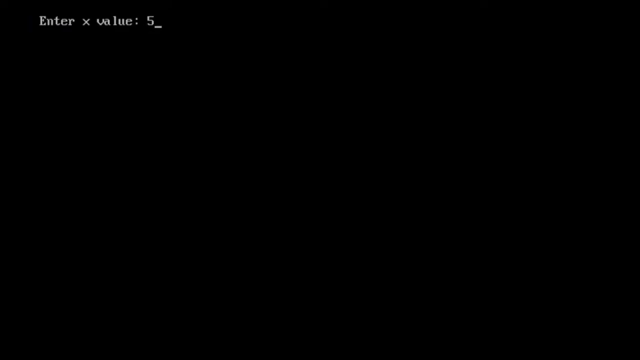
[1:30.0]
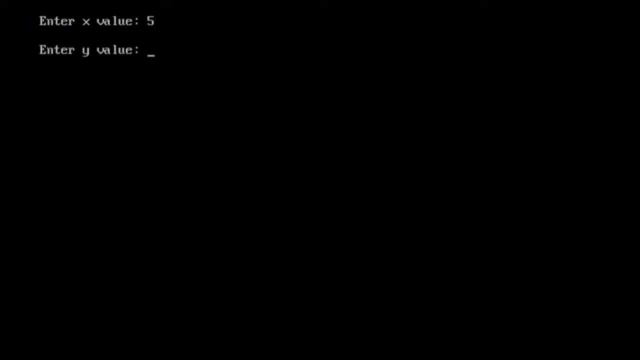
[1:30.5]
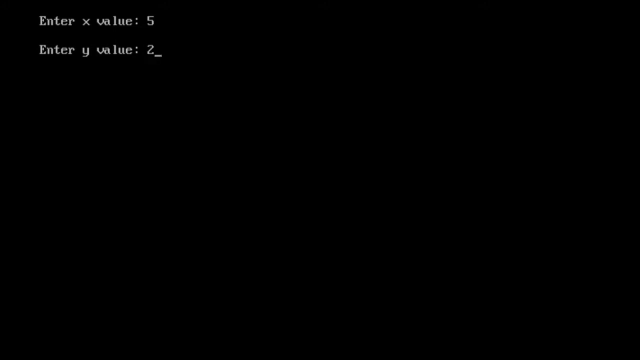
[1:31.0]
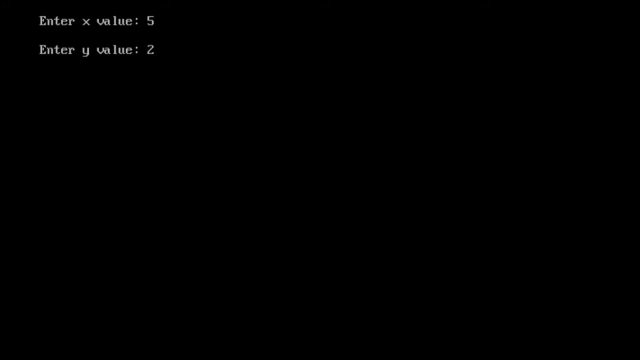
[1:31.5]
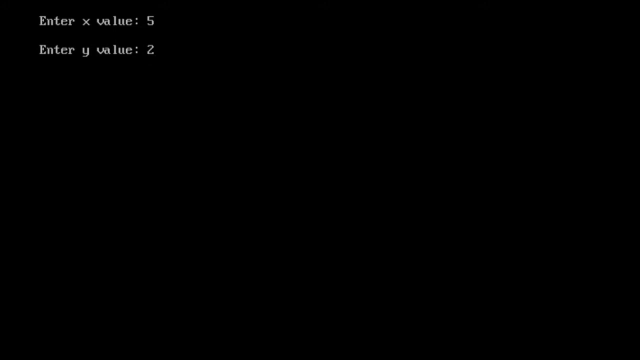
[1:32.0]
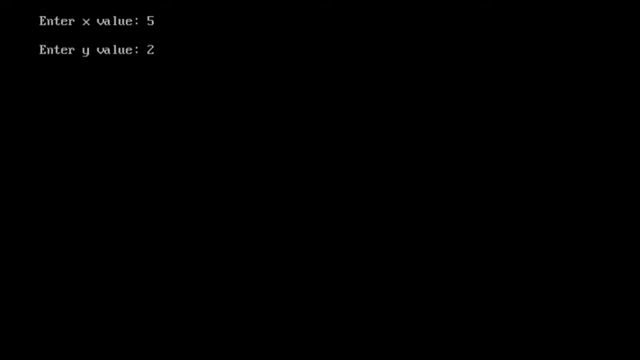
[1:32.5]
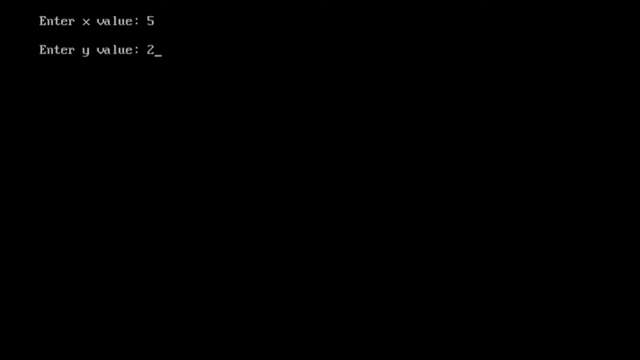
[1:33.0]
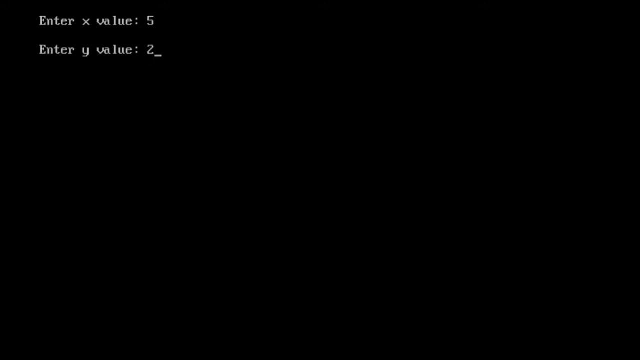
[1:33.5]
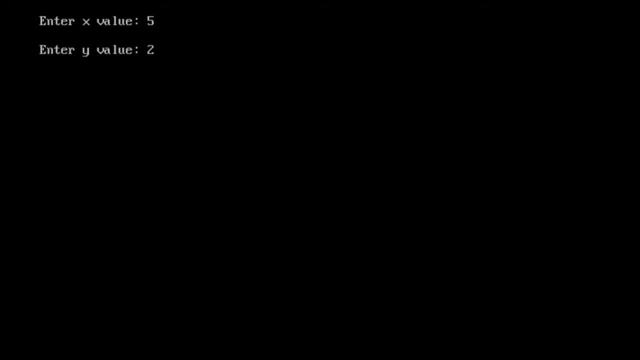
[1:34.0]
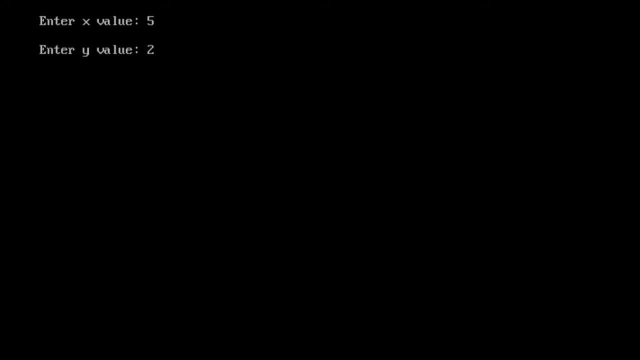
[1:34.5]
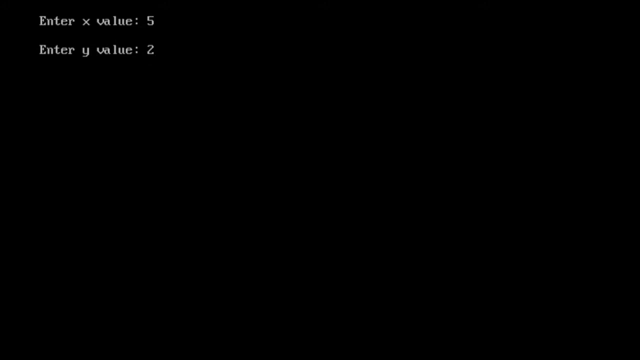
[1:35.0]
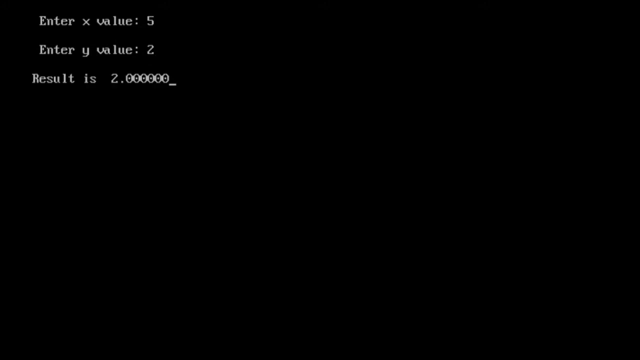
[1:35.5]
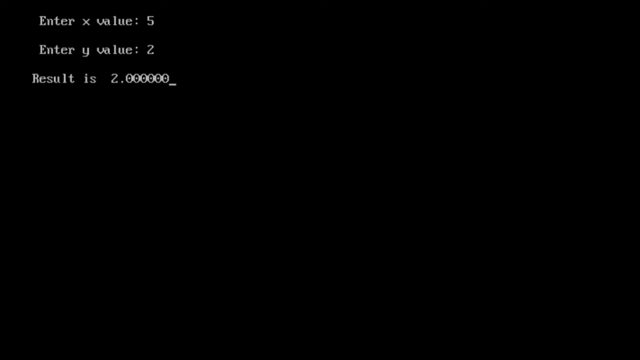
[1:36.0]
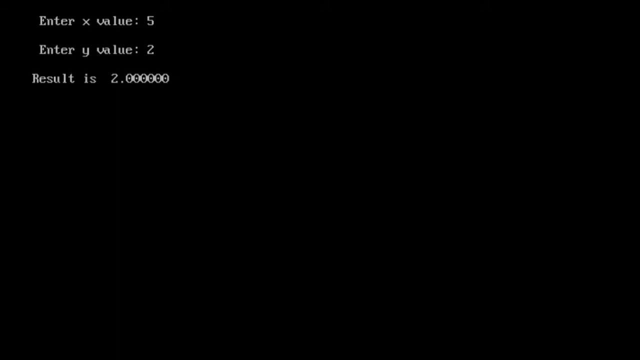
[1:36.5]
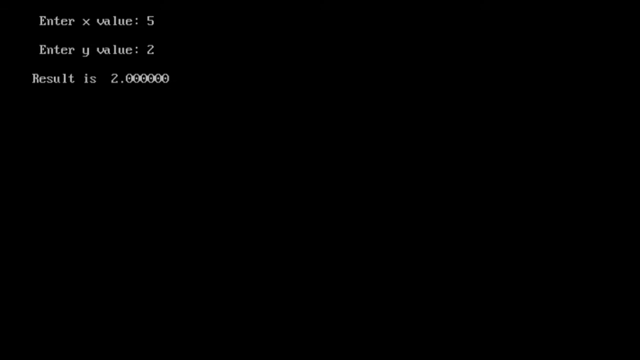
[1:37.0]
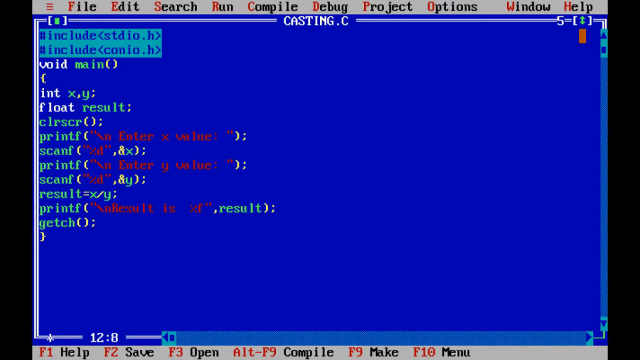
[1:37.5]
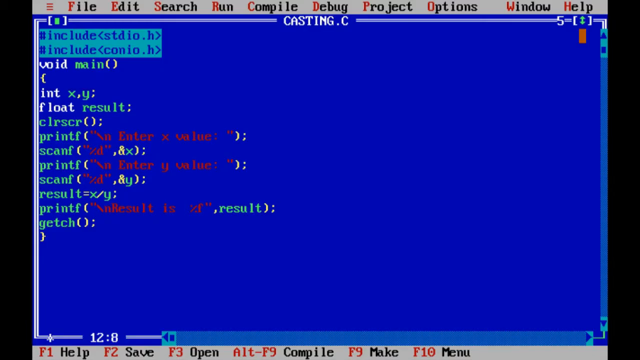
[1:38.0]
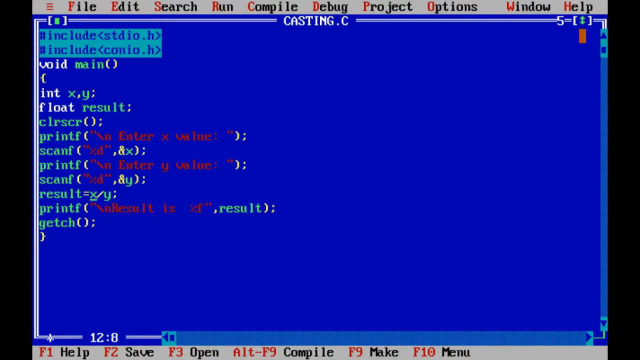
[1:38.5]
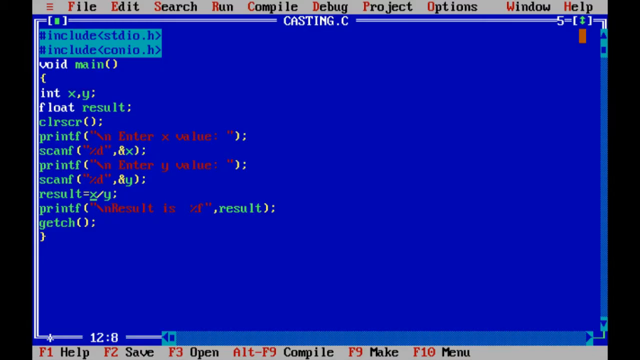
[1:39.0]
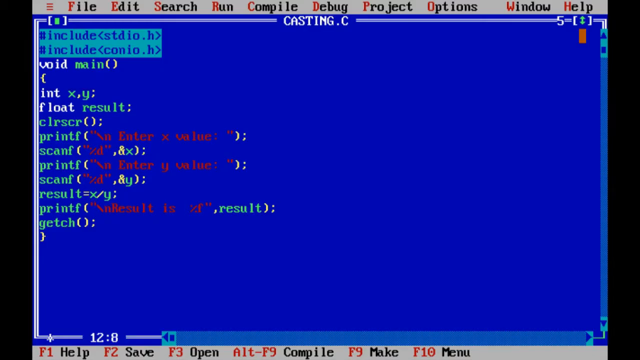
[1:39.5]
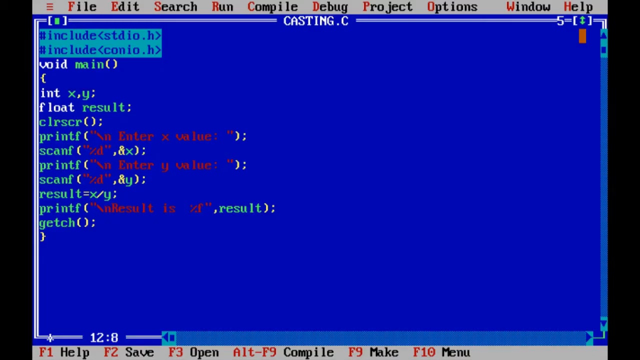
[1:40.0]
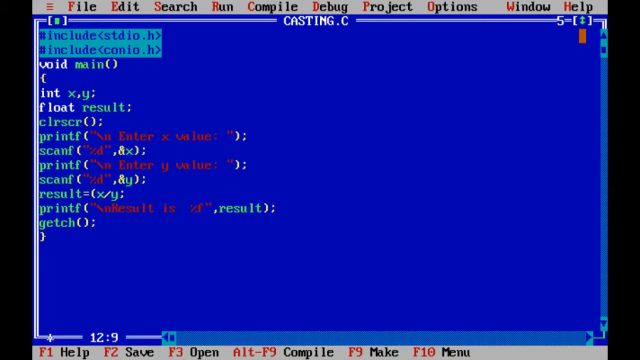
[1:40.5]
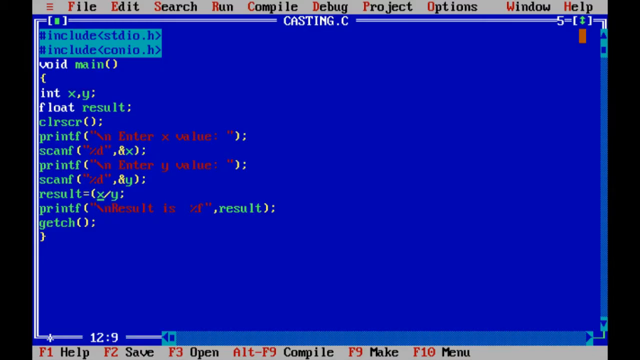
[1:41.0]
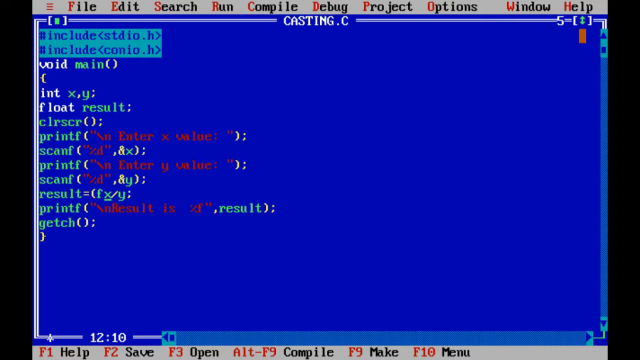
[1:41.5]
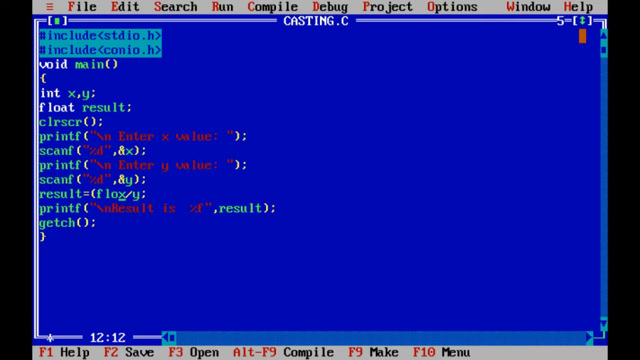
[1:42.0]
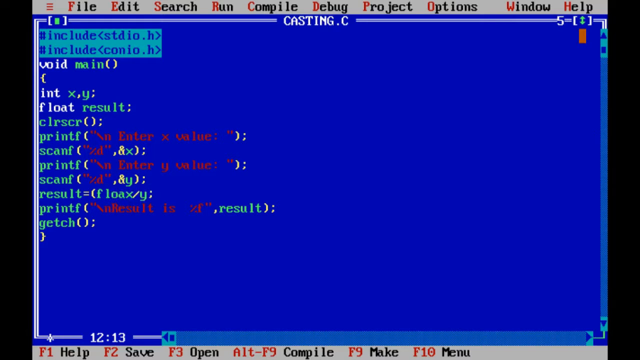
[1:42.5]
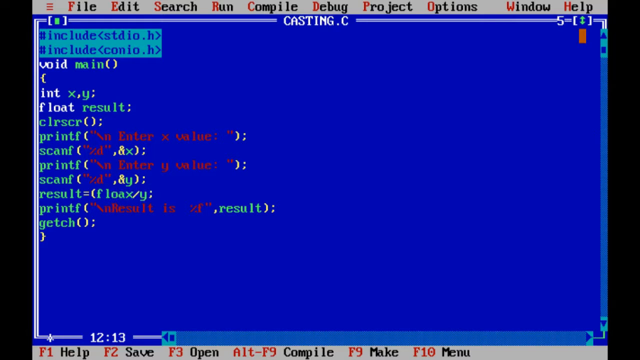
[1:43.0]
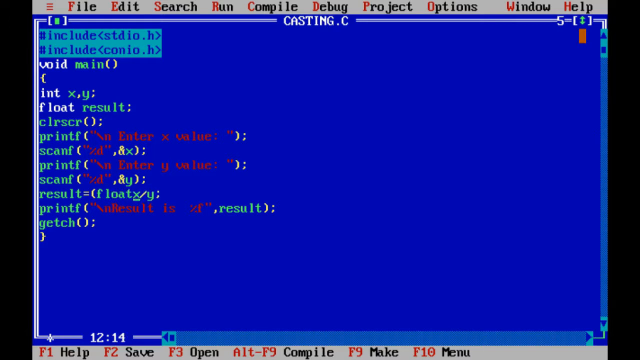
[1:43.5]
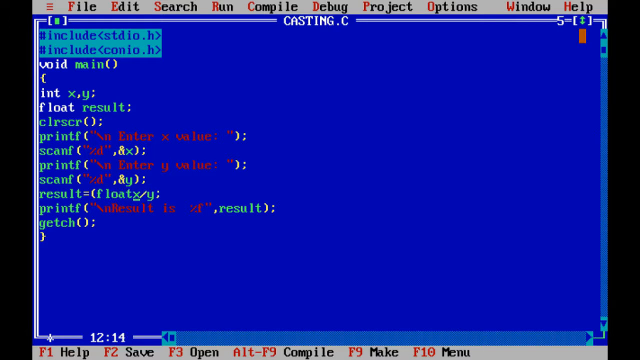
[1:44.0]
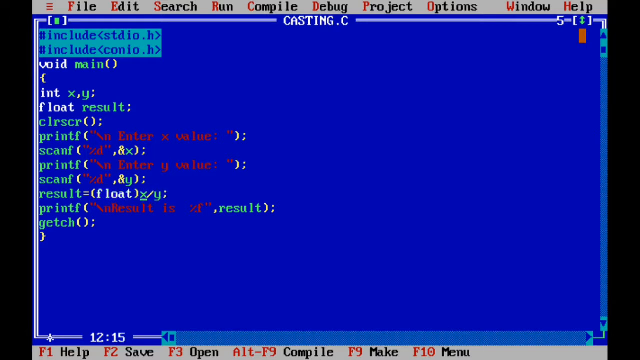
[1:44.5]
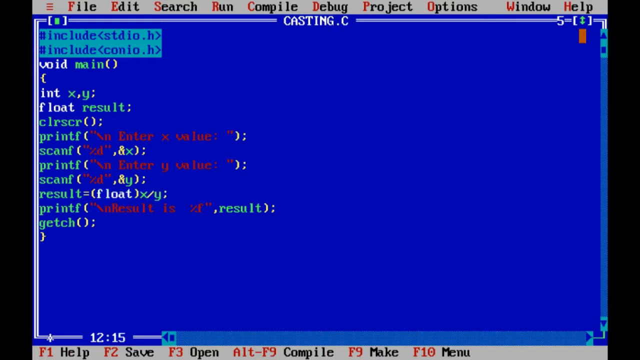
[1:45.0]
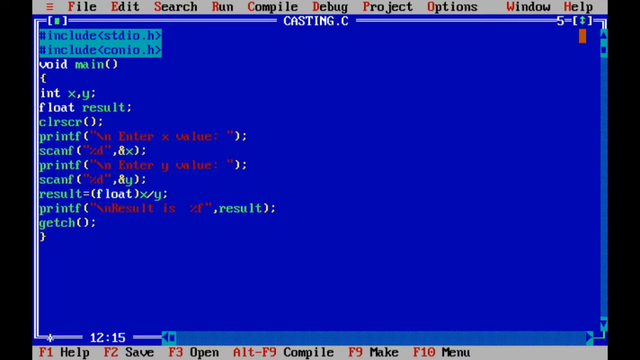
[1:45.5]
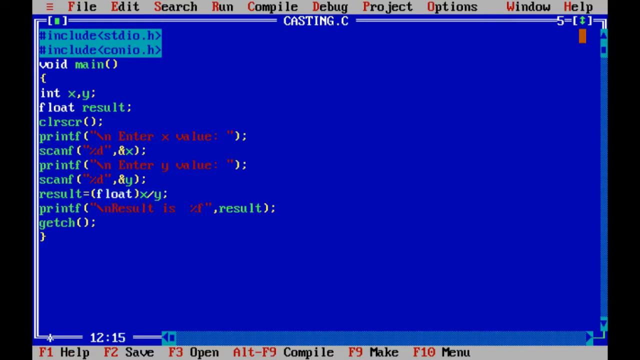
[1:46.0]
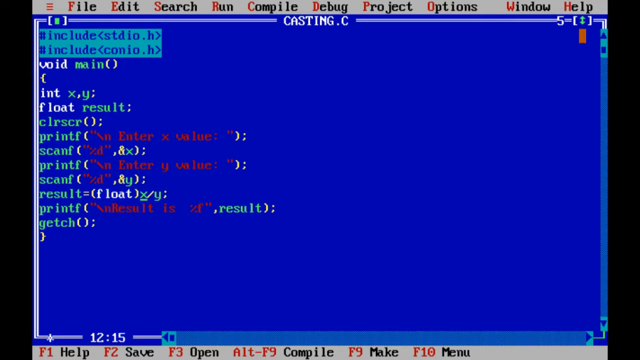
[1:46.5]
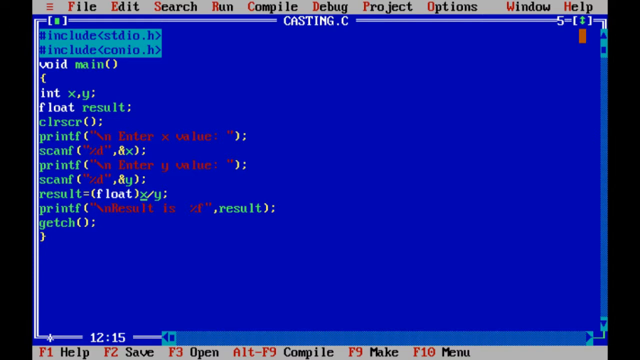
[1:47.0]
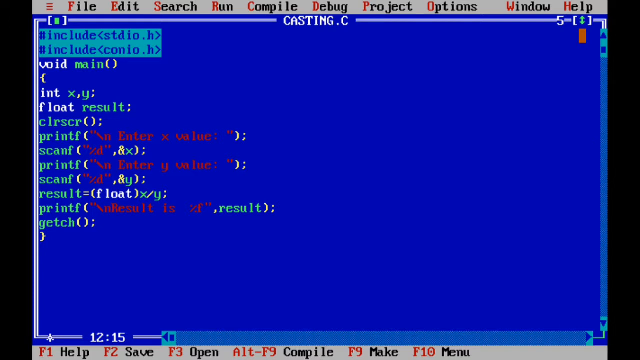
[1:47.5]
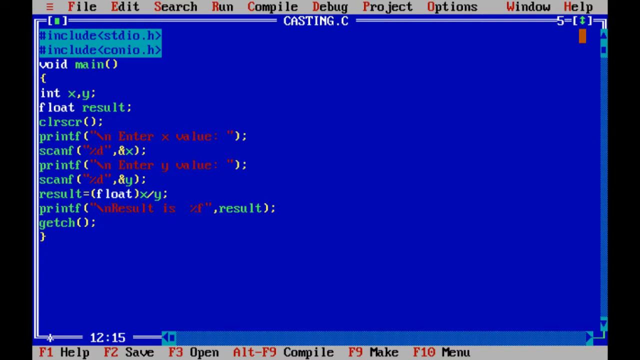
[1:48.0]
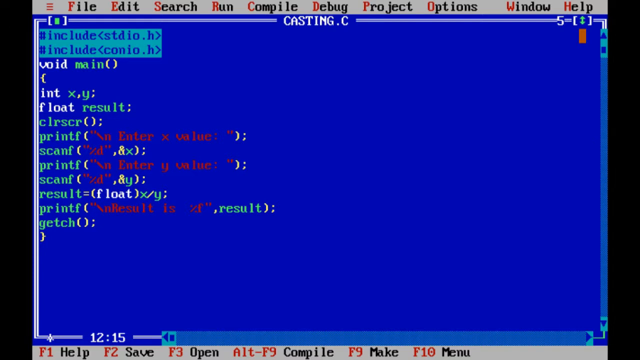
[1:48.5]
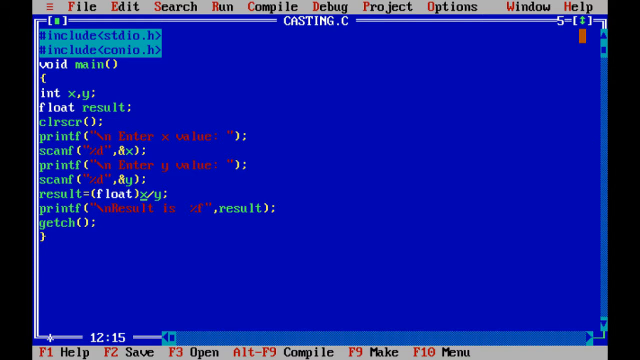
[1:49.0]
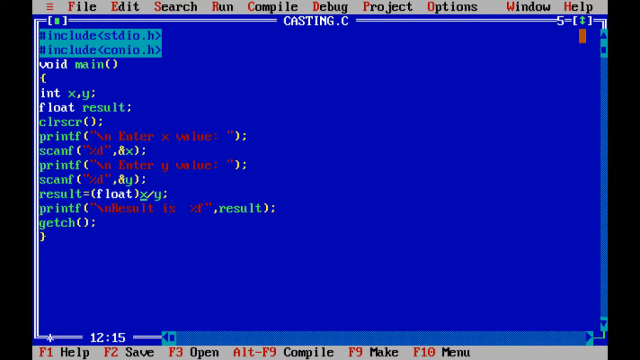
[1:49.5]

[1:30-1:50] A static IDE screen with a blue background and about 13 lines of code is shown very briefly before quickly switching to a black output screen where the code is being run. Two lines of text quickly appear: the top one reads "enter x value:" with the integer 5, and the second reads "enter y value:" with the integer 2. After a pause of a few seconds, the view returns to the IDE, where the user is editing line 10, which currently reads "result =x/y;". The user changes it to include the word float, which is referenced earlier in the code to hold the result variable. The edited line reads "result=(float)x/y;".